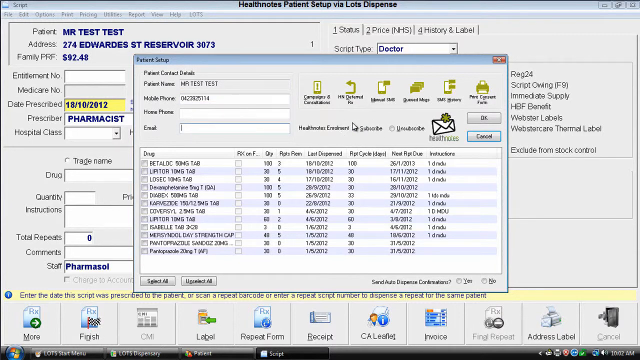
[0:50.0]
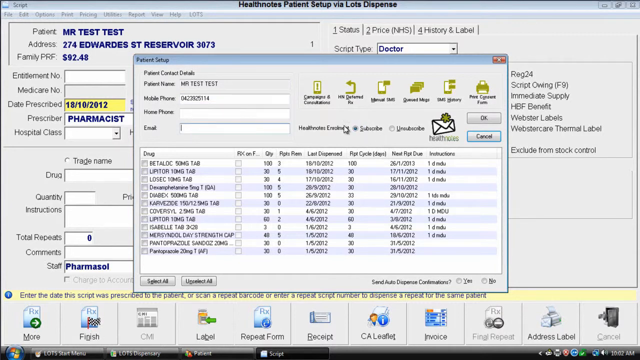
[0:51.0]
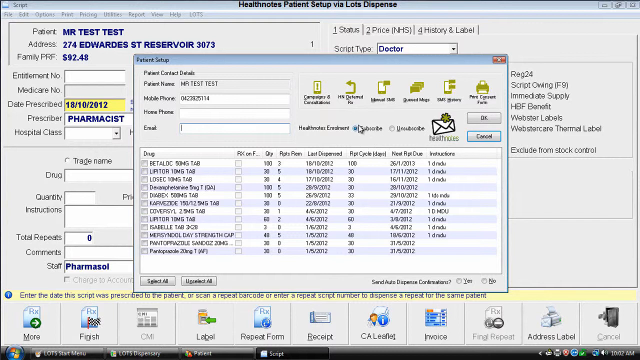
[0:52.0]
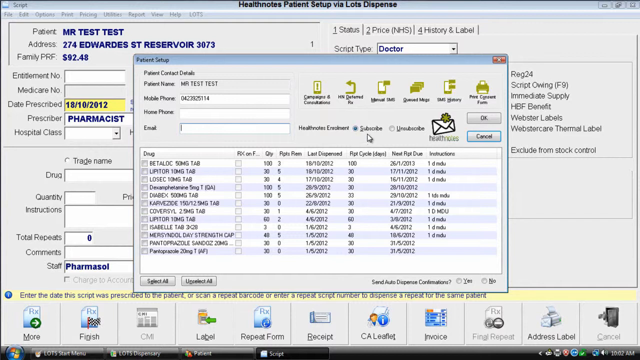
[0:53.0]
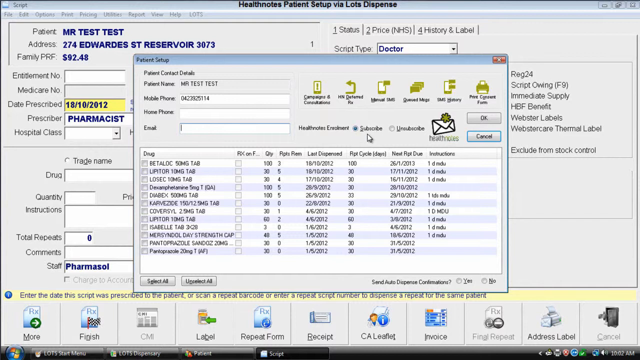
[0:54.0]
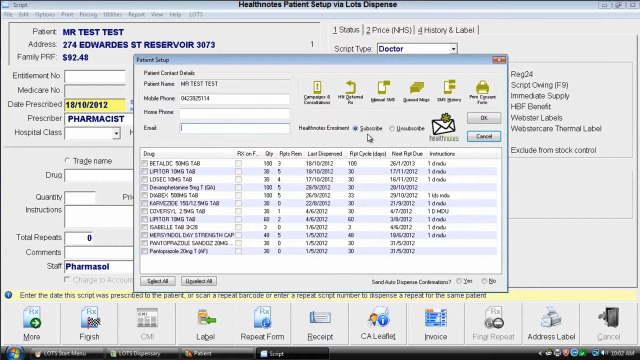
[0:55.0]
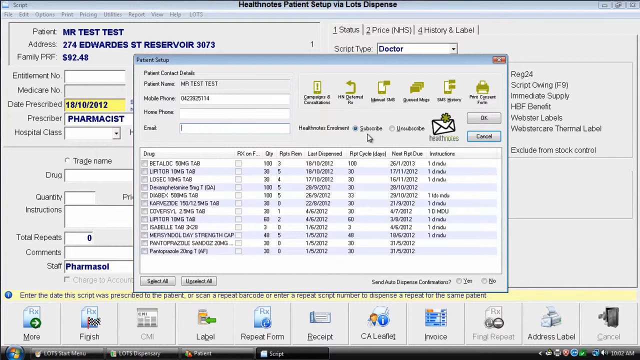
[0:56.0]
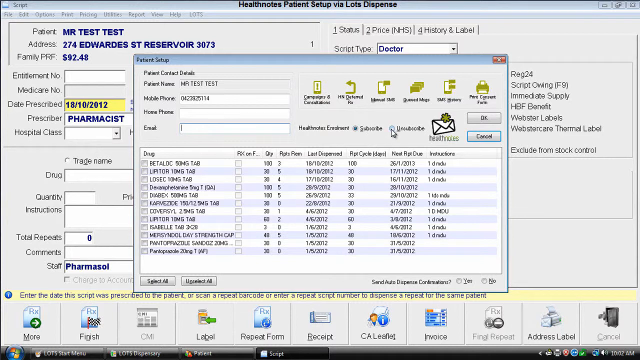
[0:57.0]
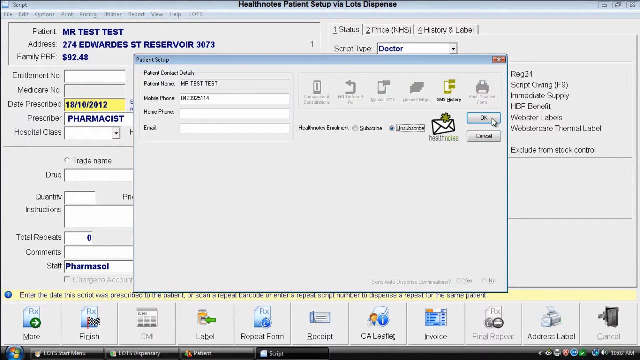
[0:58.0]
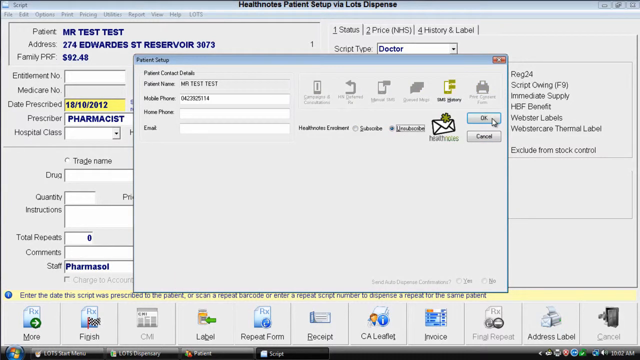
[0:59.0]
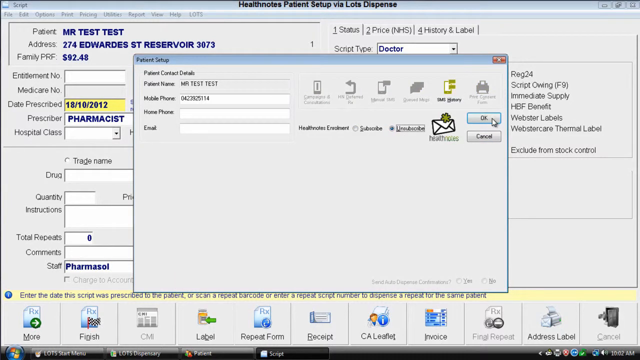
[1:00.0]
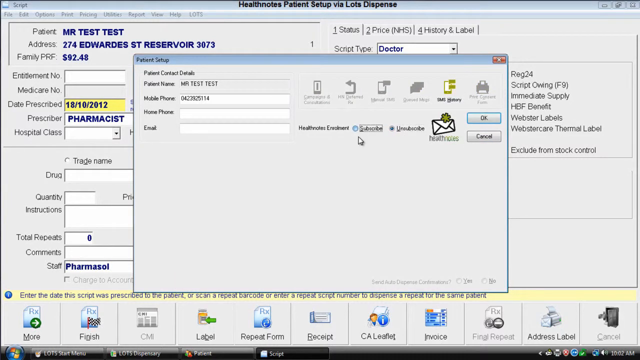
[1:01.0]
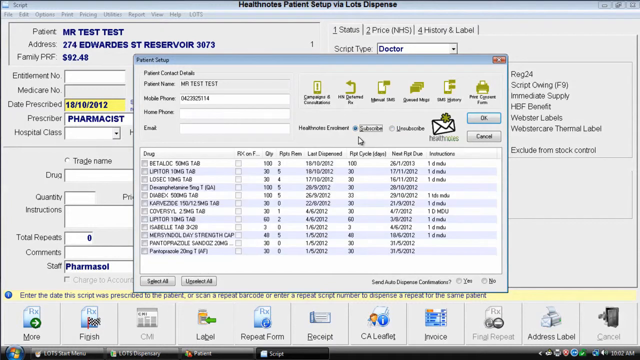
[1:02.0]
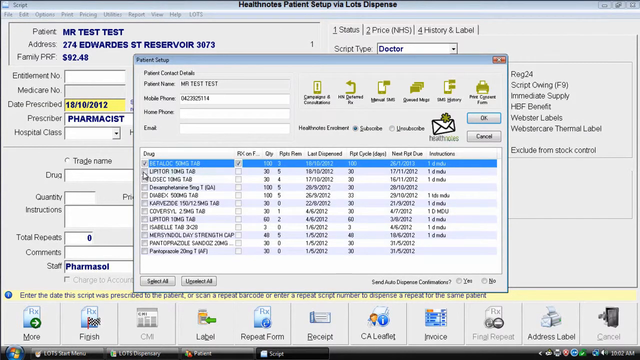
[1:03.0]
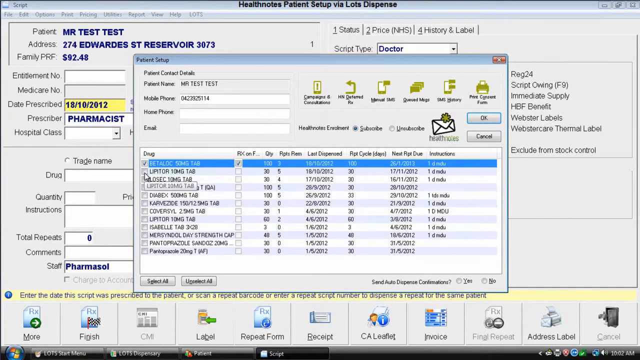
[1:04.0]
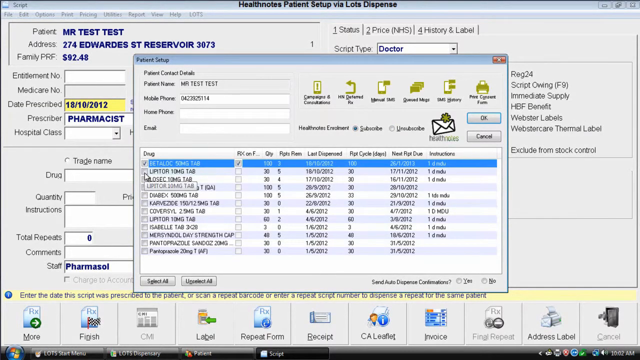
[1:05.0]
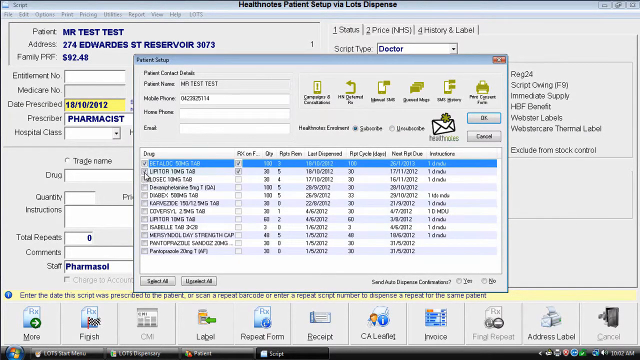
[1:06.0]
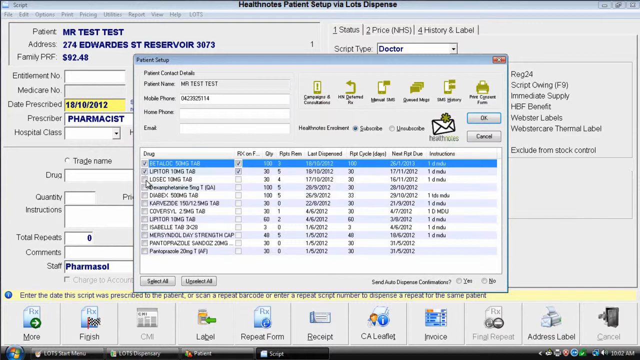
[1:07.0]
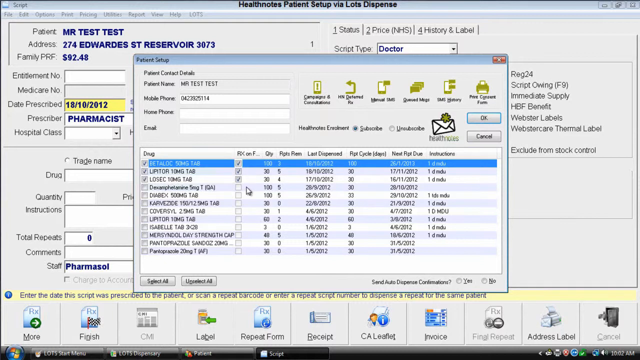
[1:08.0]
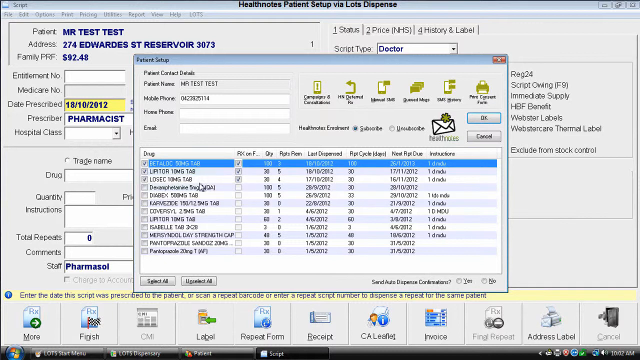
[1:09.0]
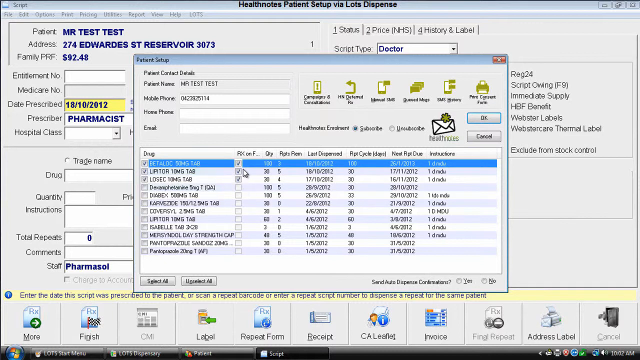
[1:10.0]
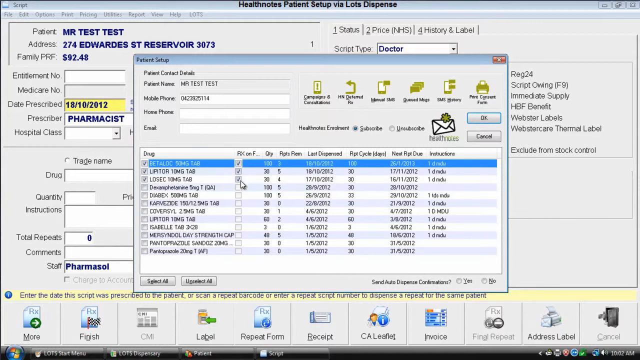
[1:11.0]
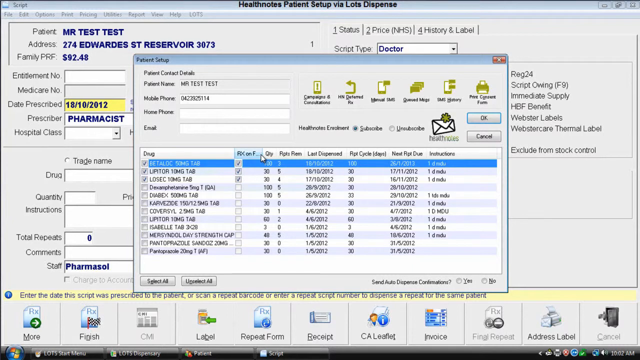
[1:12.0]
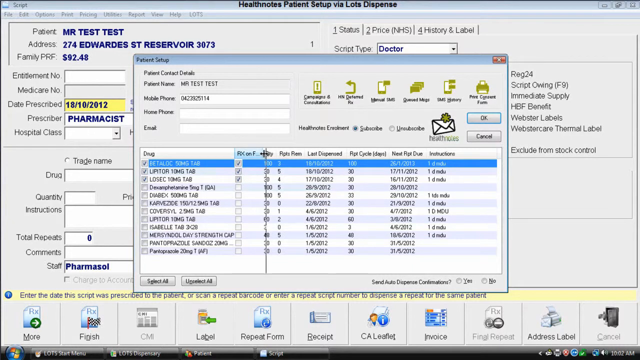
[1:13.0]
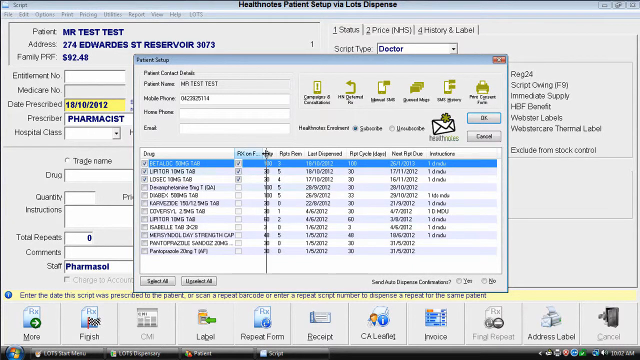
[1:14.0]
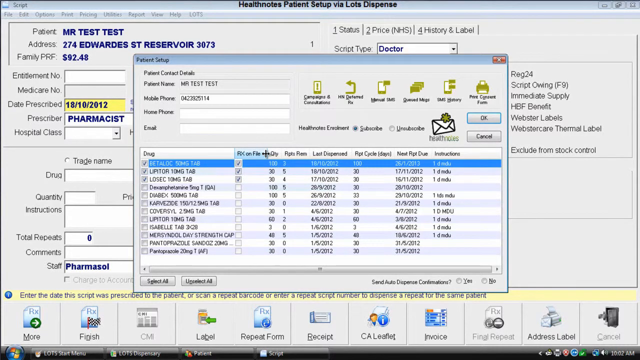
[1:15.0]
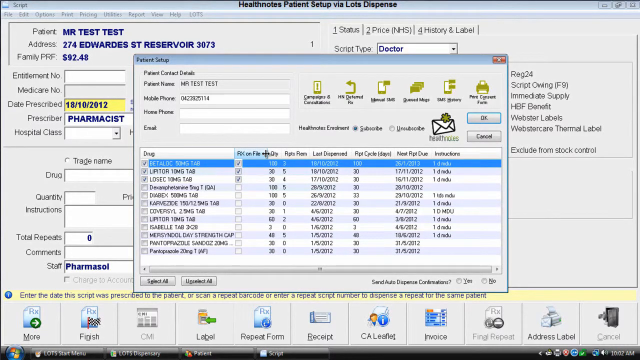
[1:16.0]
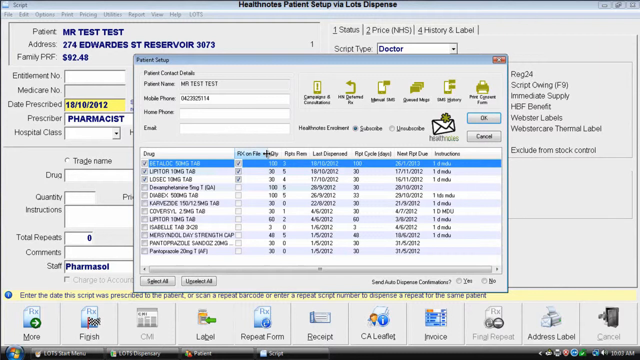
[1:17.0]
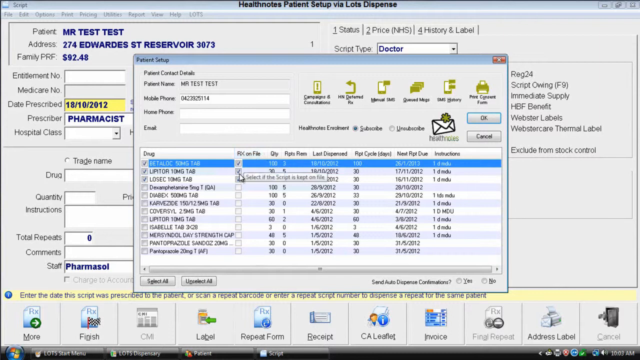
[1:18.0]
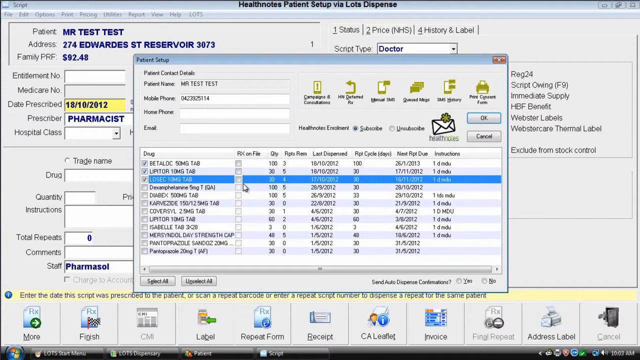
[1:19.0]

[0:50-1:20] The user hovers the mouse over the healthnotes enrollment section of the patient setup window, which has subscribe and unsubscribe radio buttons, with subscribe currently selected. The user selects the unsubscribe radio button, making the list of medications in the window underneath it disappear, then reselects subscribe, which repopulates the drug list. The user goes down and checks the checkmarks for the first three drugs listed, which also checks the corresponding checkmarks on the right side of those three drugs. The user then adjusts the sizing between the columns a bit, widening the second column, which reveals the complete labels of "Rx on File." The user then goes down and unselects the checkboxes in the second list under the heading "Rx on file."